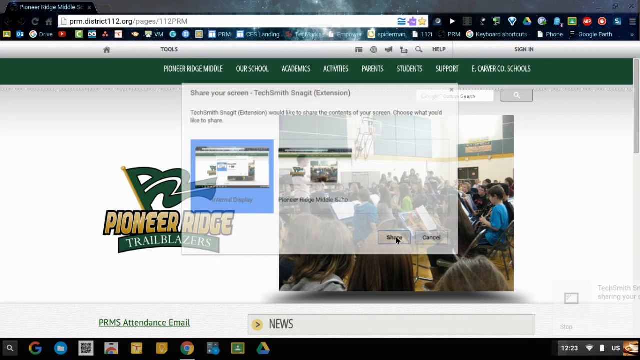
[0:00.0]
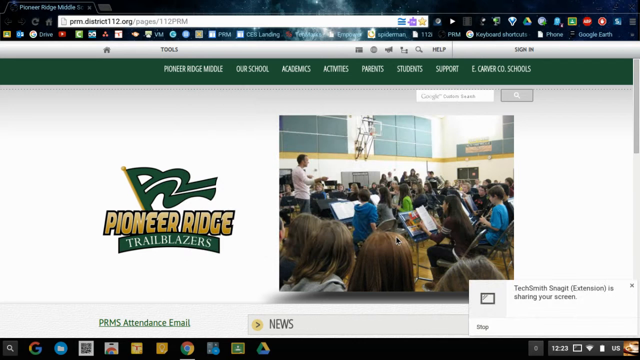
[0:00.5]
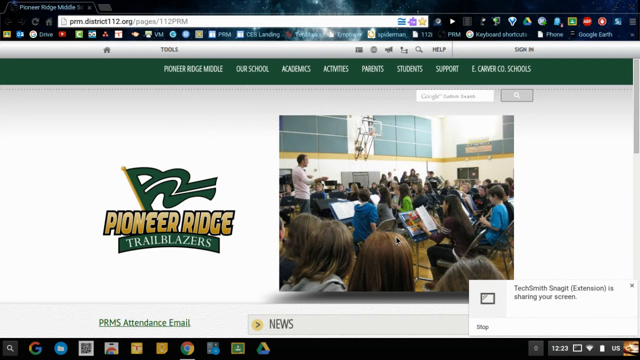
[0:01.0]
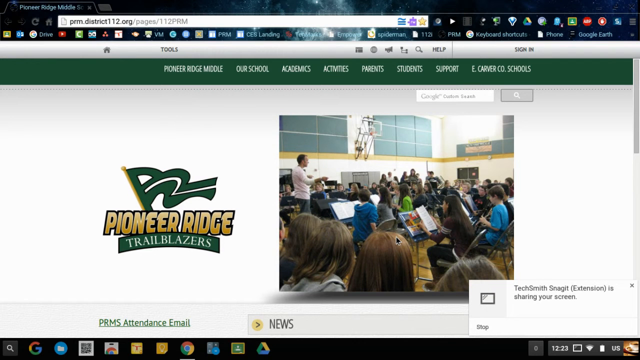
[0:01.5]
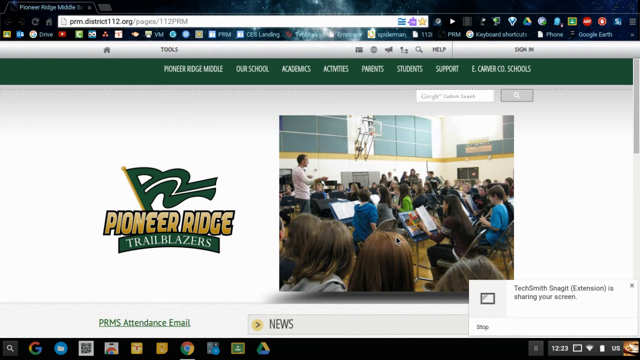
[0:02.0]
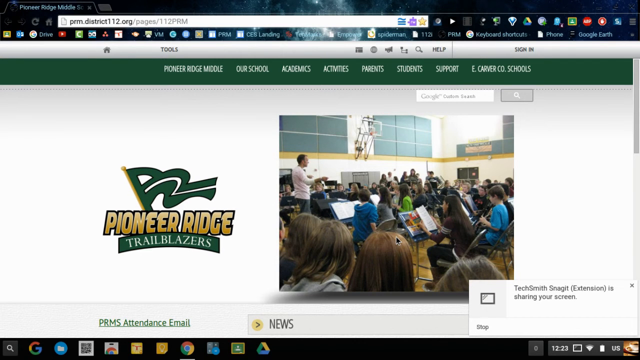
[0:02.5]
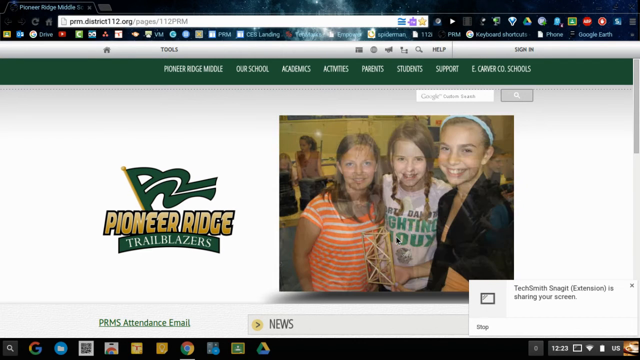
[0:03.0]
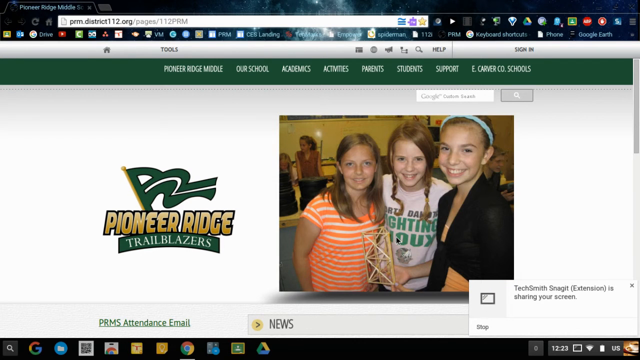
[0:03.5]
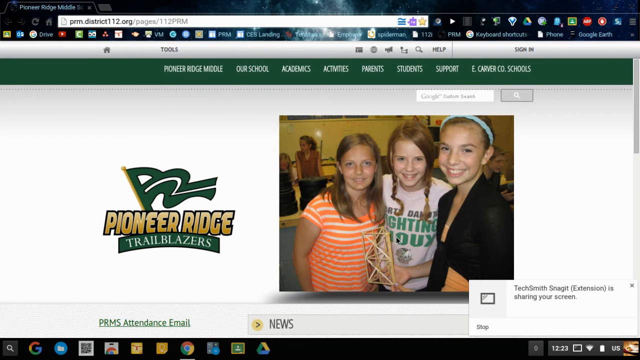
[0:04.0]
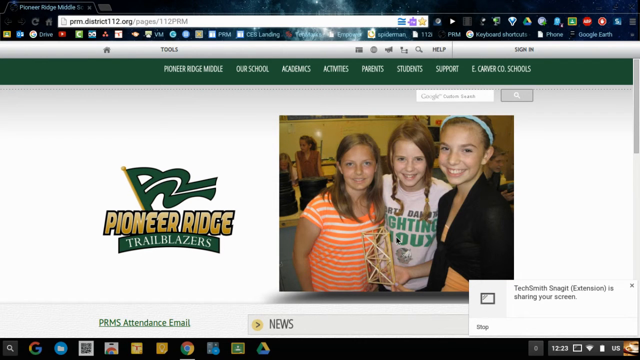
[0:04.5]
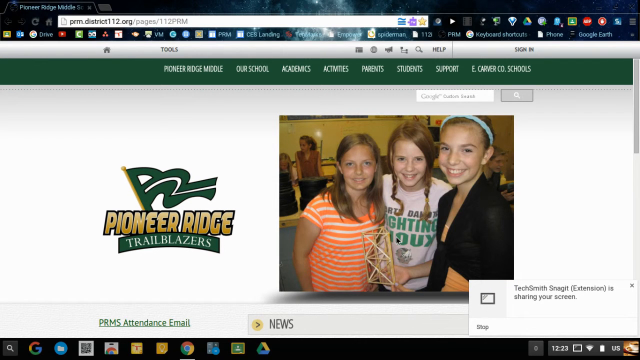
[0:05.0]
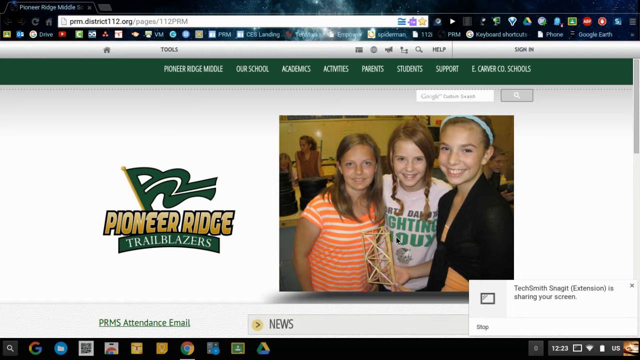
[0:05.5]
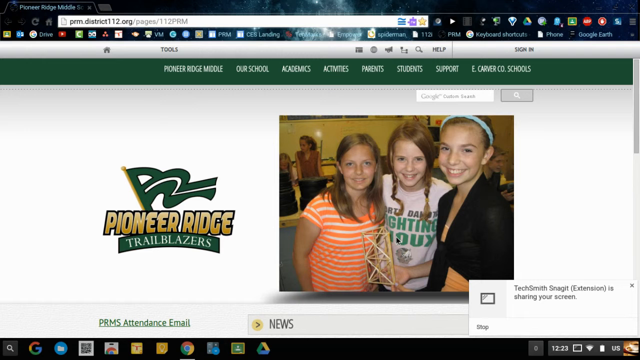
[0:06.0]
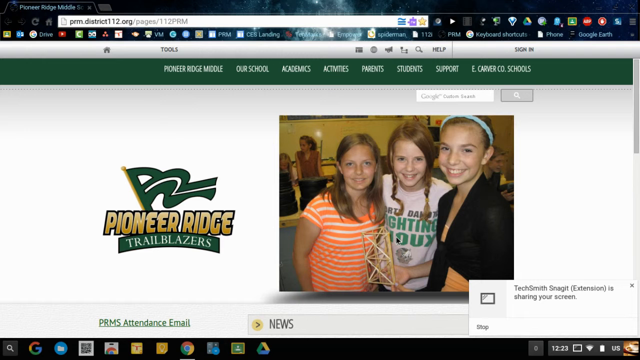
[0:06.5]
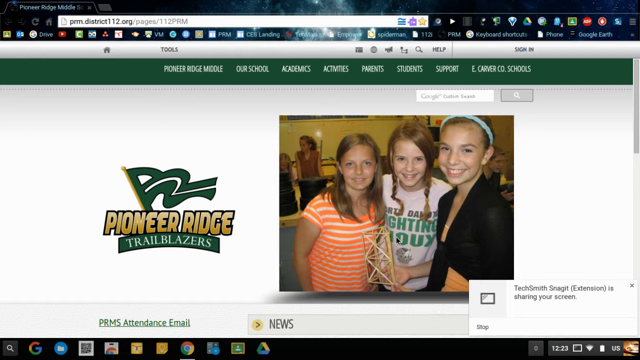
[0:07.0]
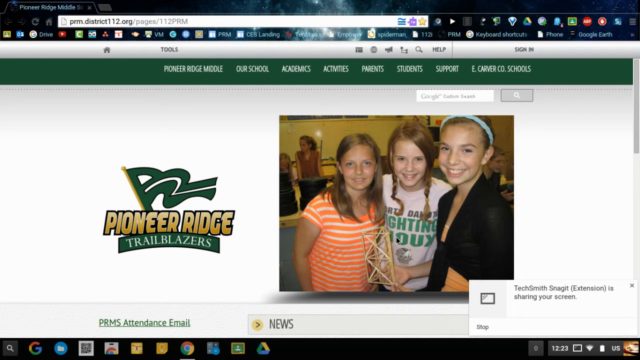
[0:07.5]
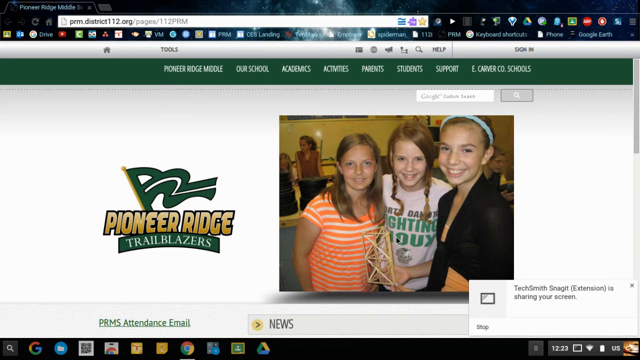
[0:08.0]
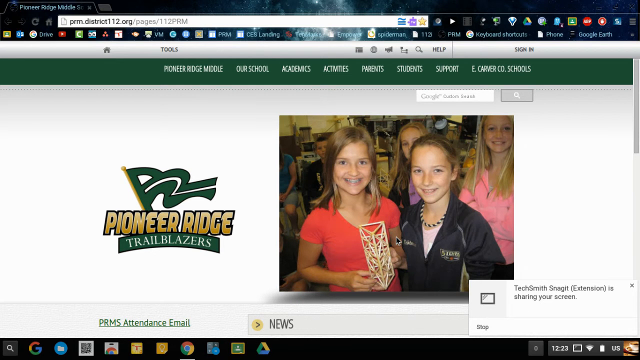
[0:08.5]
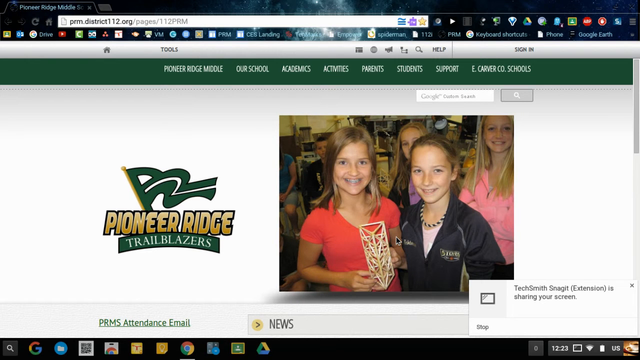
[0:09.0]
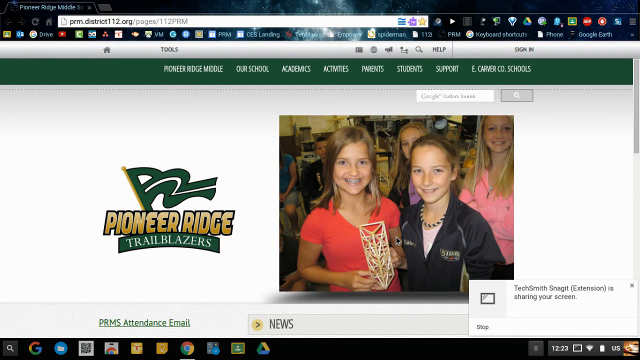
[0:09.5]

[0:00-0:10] A title for the Pioneer Ridge Trailblazers appears: "Pioneer Ridge" is in gold lettering on a very tight green background, and a green and white symbolic flag is attached at the bottom to a green base with white letters reading "trailblazers." Next comes a picture of what looks like a music hall. Then there are pictures of three girls, followed by two girls each holding what may be an award or a trophy, or possibly a science project. The image then fades.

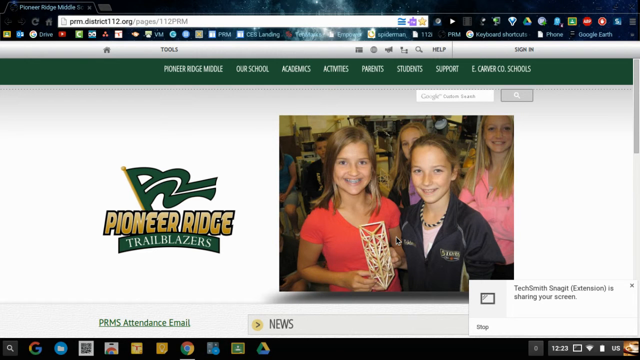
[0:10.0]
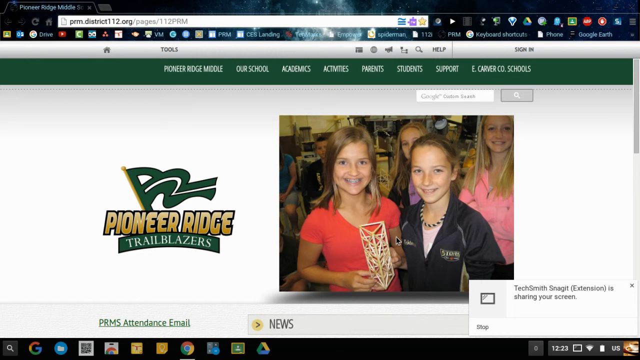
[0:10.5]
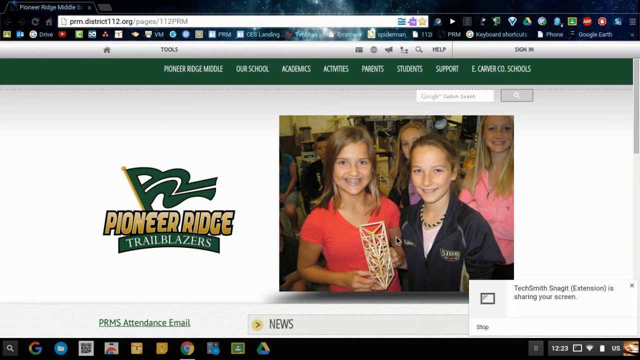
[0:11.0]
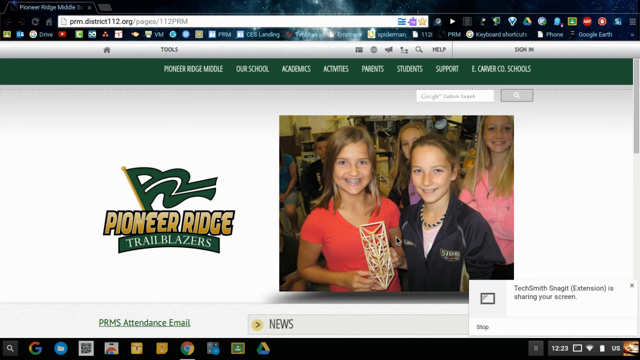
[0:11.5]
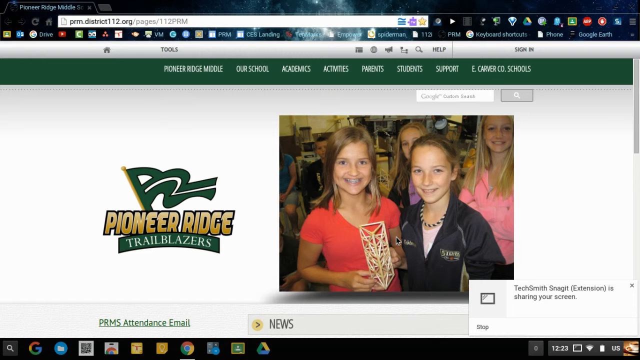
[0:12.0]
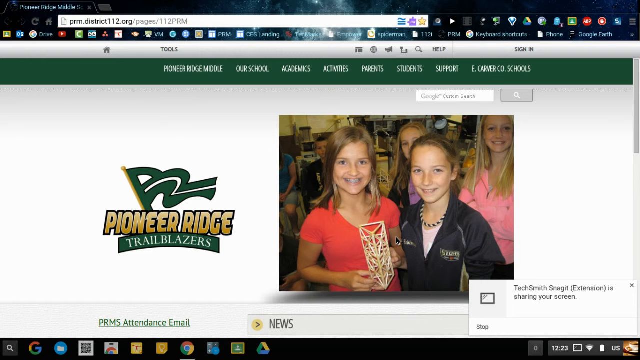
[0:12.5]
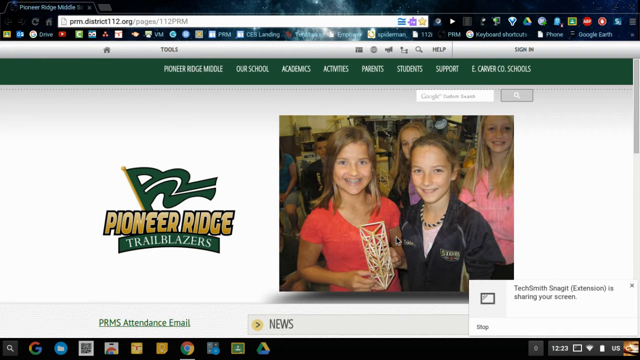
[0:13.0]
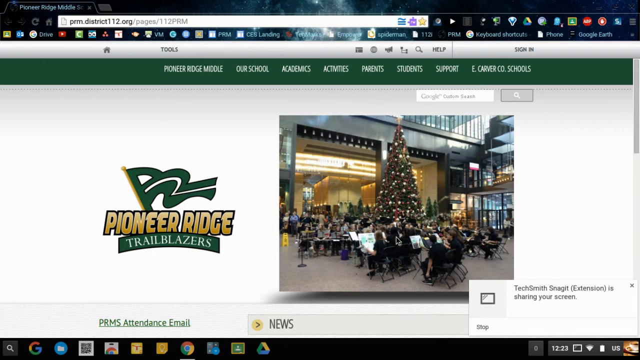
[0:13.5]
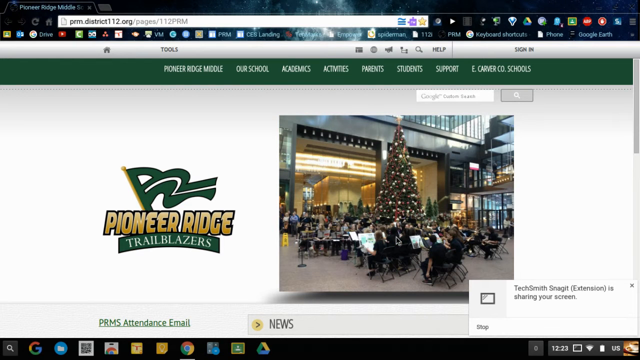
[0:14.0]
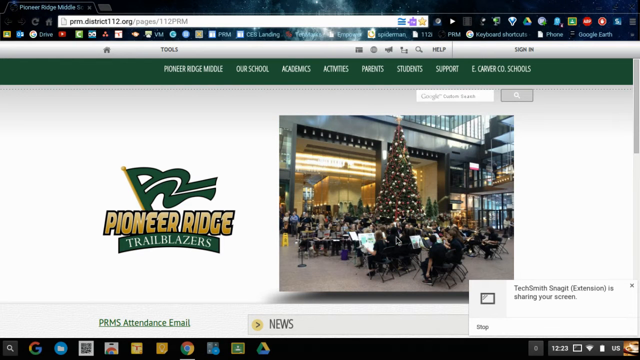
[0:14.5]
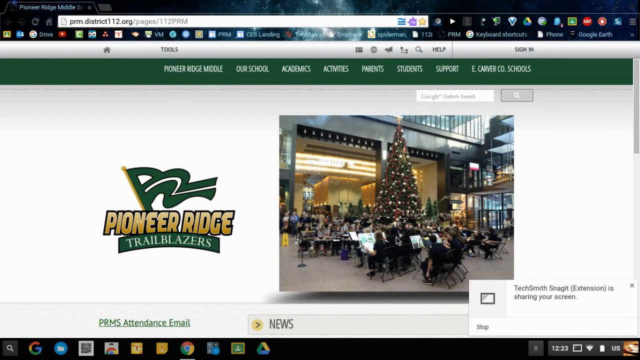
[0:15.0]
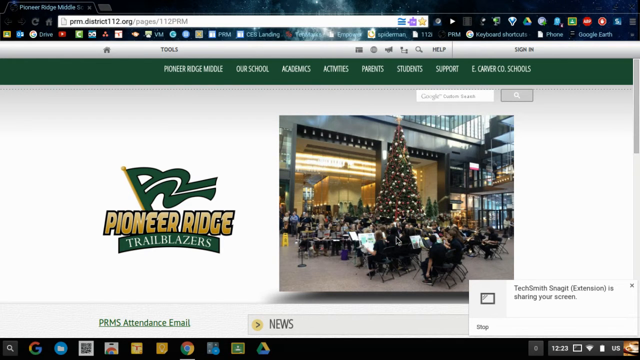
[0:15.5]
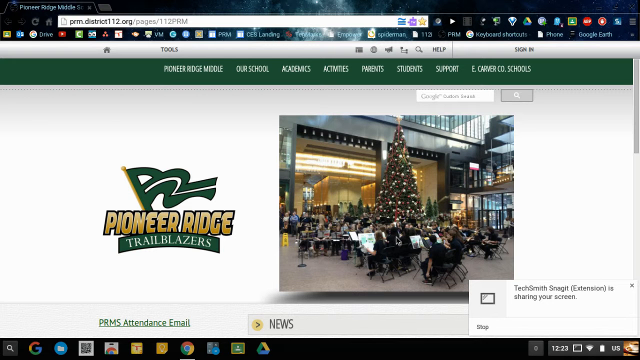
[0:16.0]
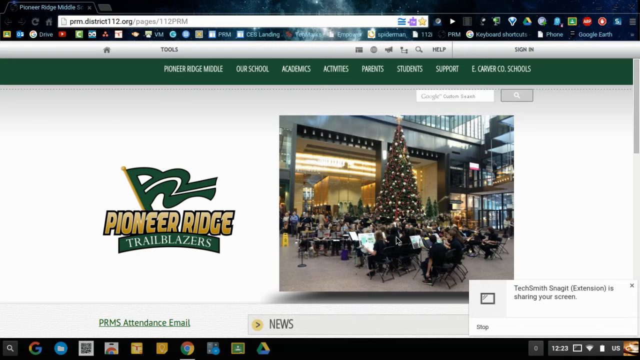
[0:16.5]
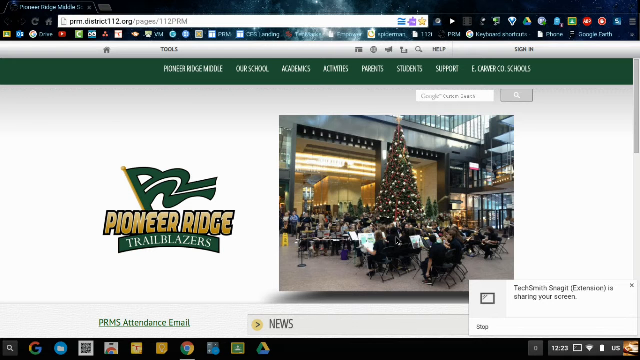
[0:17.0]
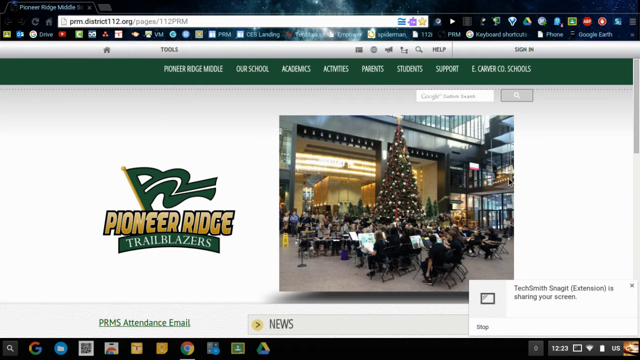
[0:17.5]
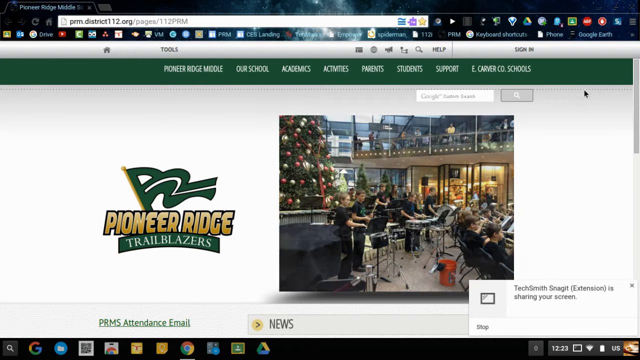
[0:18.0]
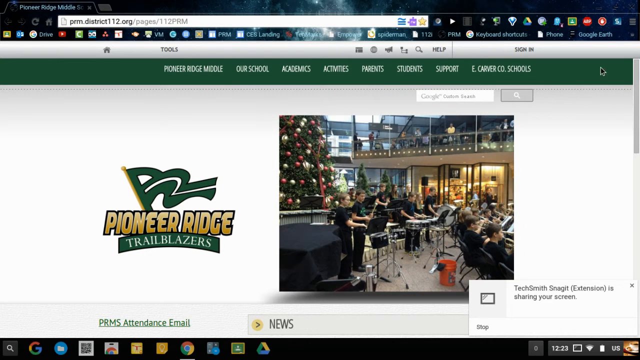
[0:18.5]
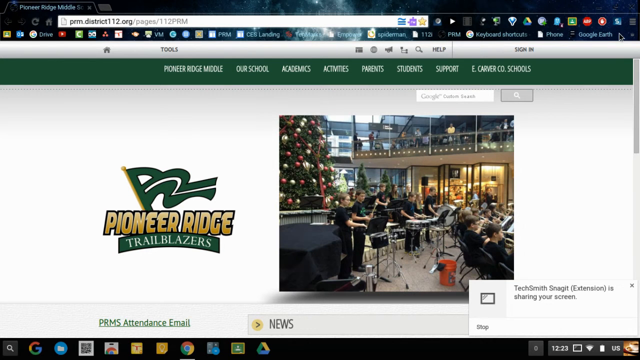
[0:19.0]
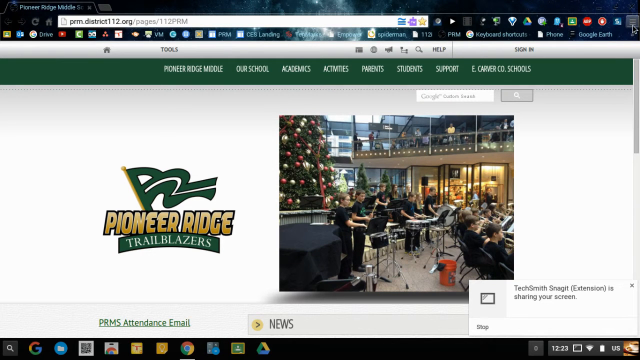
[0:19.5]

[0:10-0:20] The same picture remains, but in the lower right-hand corner, text reads "Tech Smith Snagit extension is sharing your screen." The image fades from the two girls holding the obelisk-like object to a large group, apparently a symphony, around a Christmas tree. Many musicians are around the tree, which is very big, more than 10 feet tall and maybe 15 feet tall, with a number of ornaments. There are at least 50 or 60 people in the orchestra. A yellow stand is at the far left, and the setting is a modern building with glass walls.